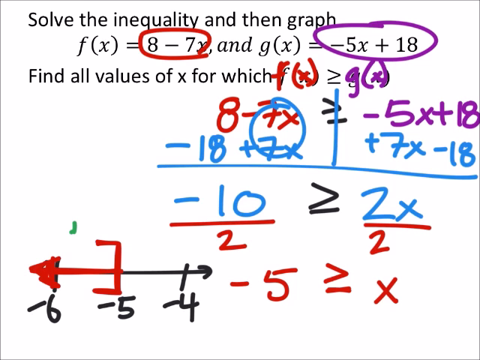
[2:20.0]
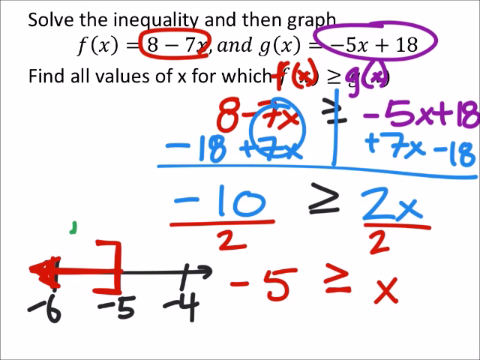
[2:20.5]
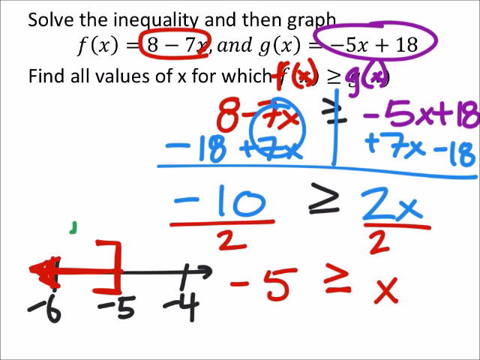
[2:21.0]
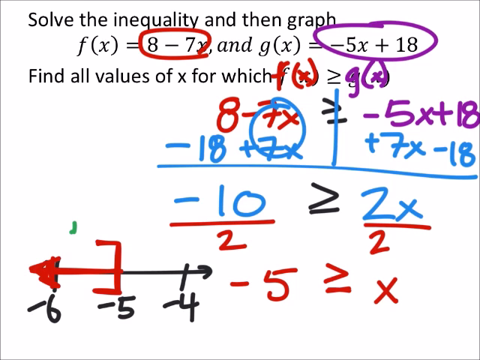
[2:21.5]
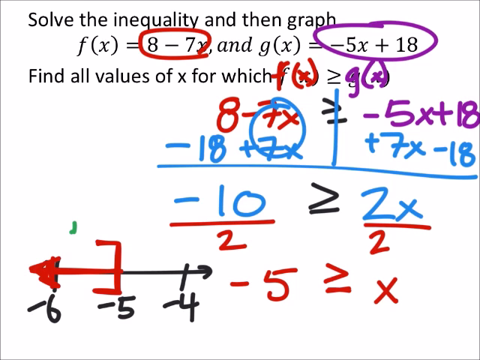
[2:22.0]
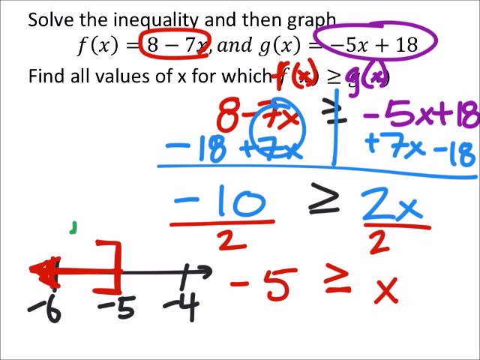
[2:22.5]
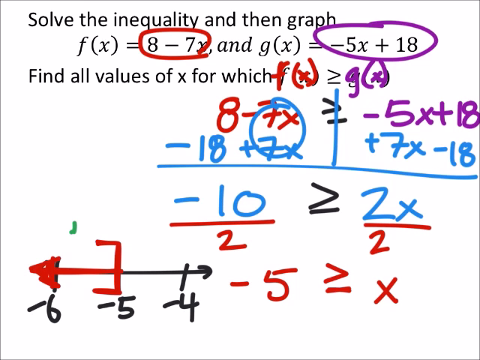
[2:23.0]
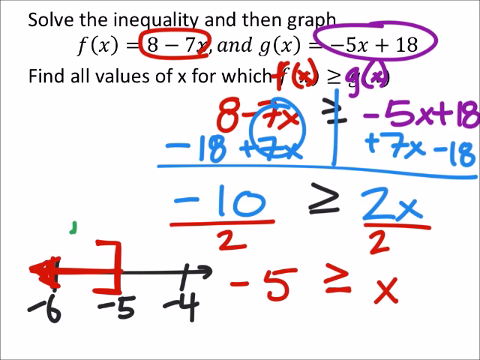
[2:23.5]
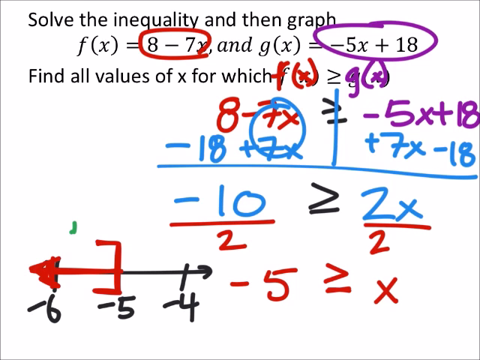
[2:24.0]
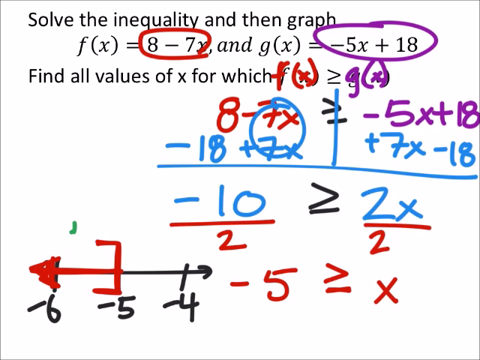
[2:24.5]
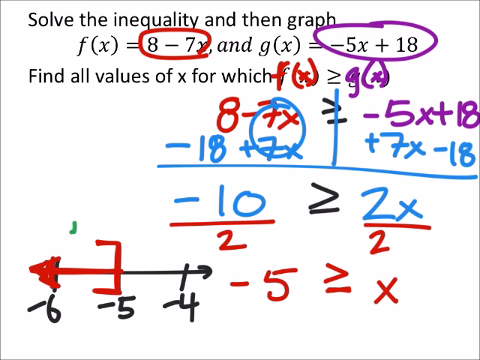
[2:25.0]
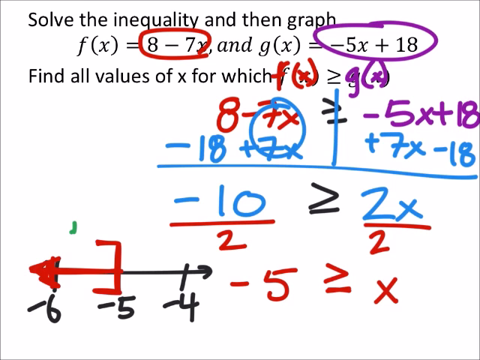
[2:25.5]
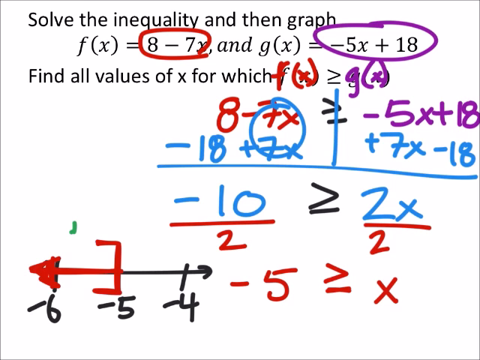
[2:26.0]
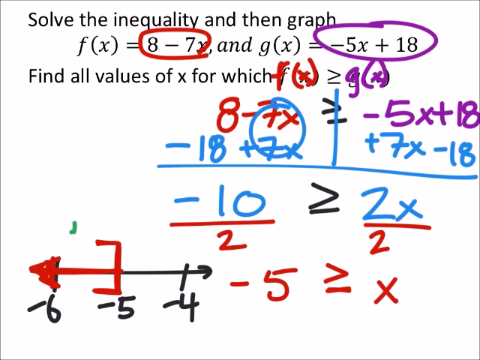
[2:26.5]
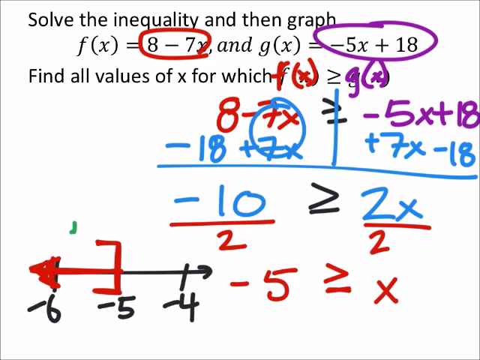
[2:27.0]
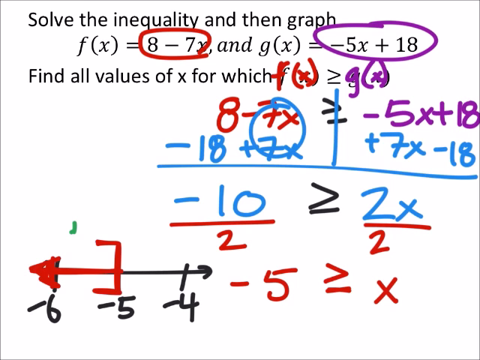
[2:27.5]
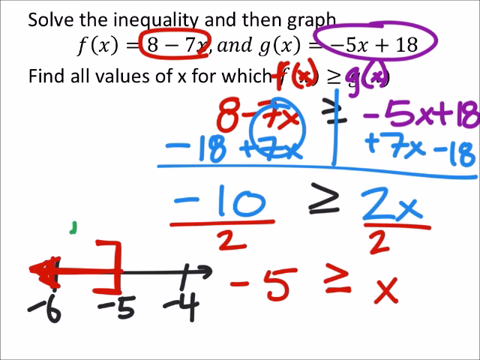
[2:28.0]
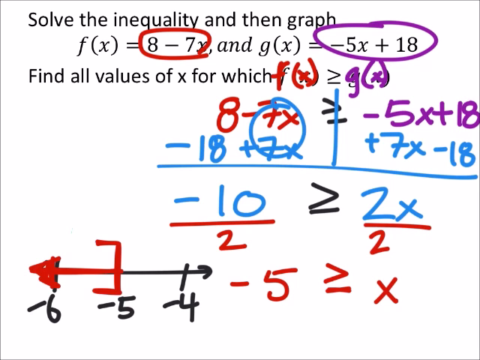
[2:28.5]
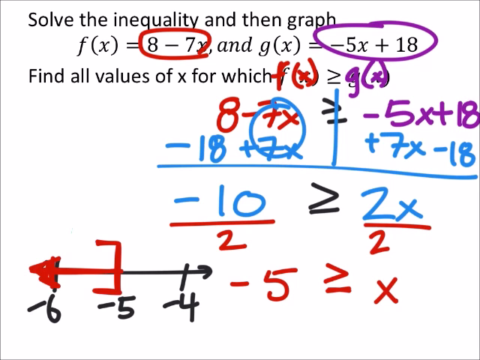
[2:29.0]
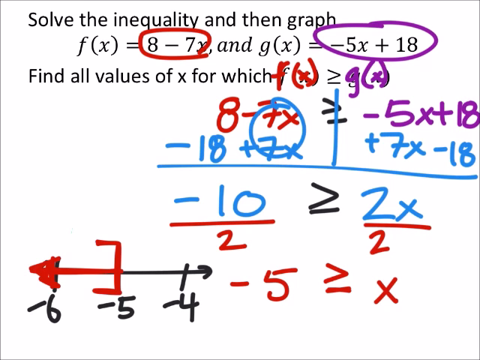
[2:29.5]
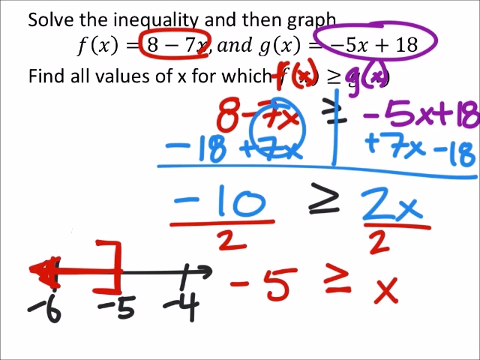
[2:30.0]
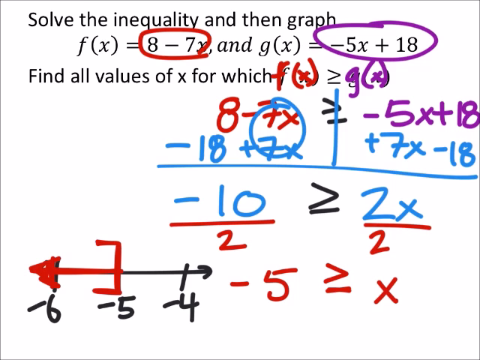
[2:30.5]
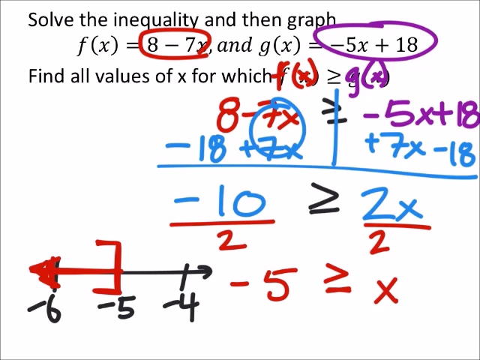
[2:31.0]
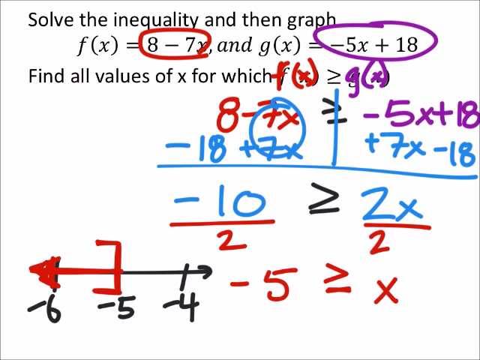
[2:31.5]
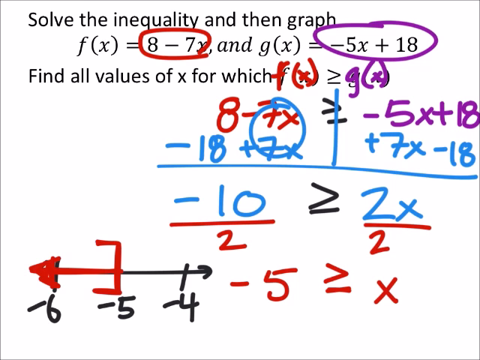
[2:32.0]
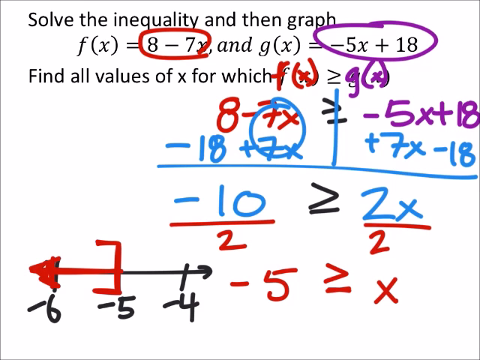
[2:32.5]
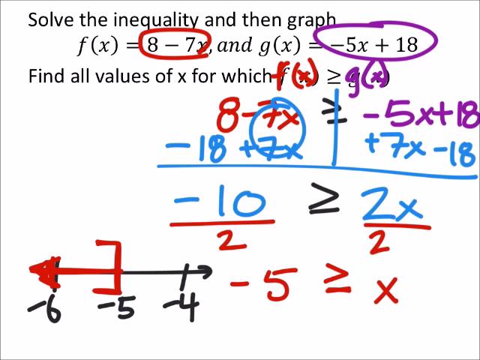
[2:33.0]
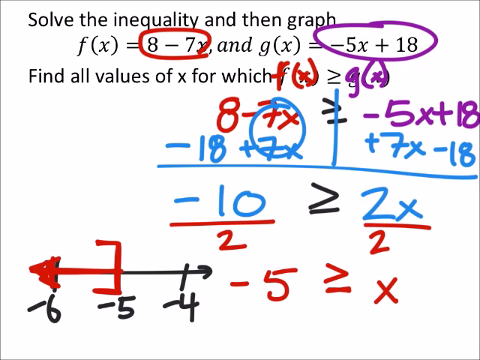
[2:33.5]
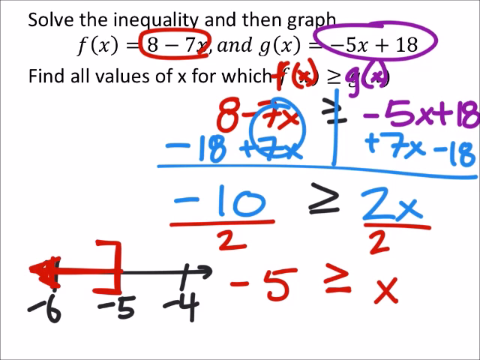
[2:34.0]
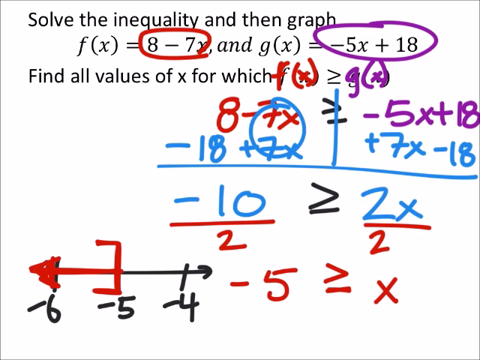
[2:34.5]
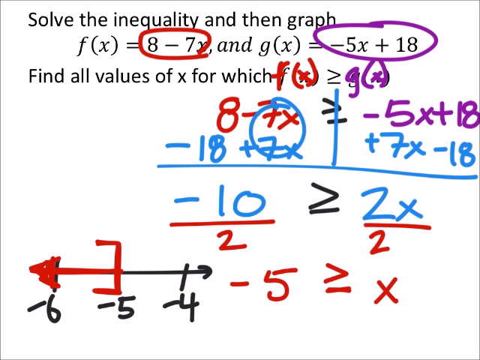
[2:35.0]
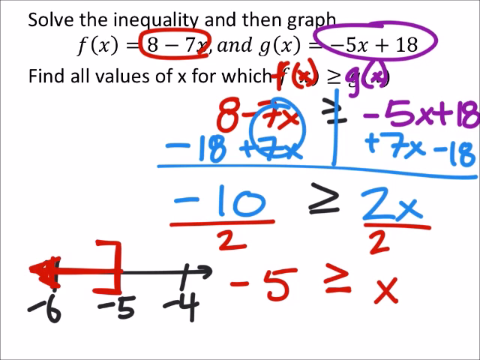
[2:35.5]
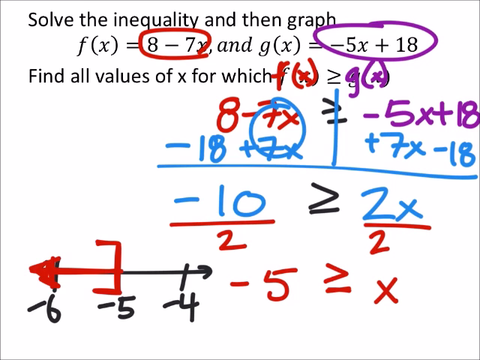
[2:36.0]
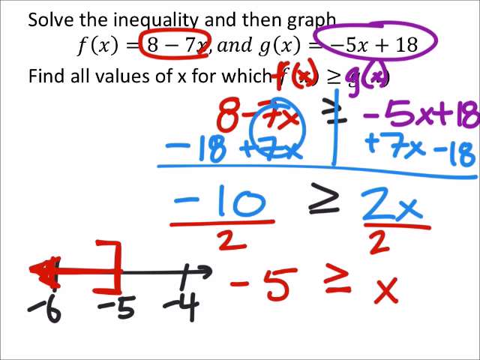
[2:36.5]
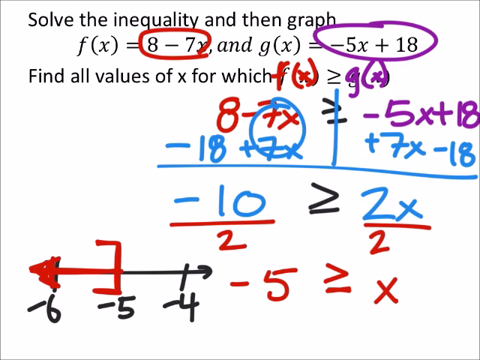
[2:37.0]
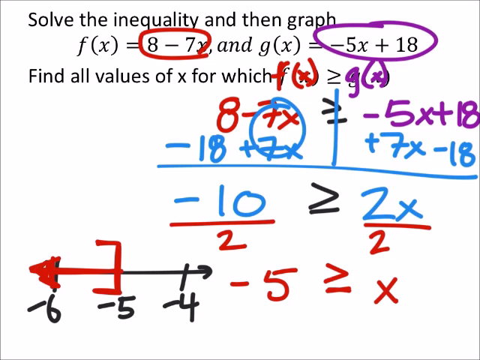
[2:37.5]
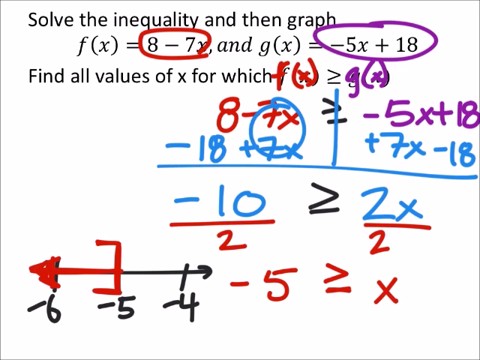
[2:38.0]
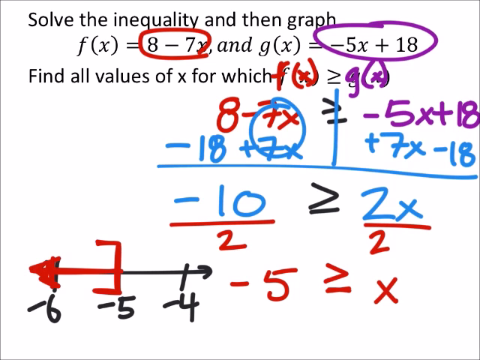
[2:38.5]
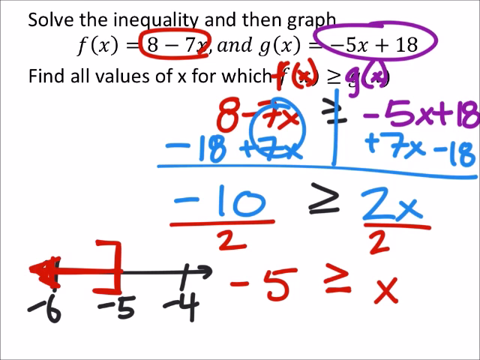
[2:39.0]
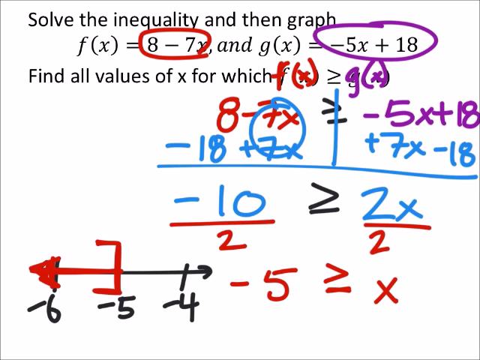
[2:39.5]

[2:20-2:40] The original equation and question remain on the screen with the markings drawn in red, blue and purple. A small vertical green line with a tiny line pointing left at its bottom is at the bottom left of the screen, above the red arrow on the black line at the bottom left. The green line is visible until about halfway through and then disappears. The original equation in black text at the top of the screen and all the red, blue, purple and black markings showing how to solve it stay on the screen.